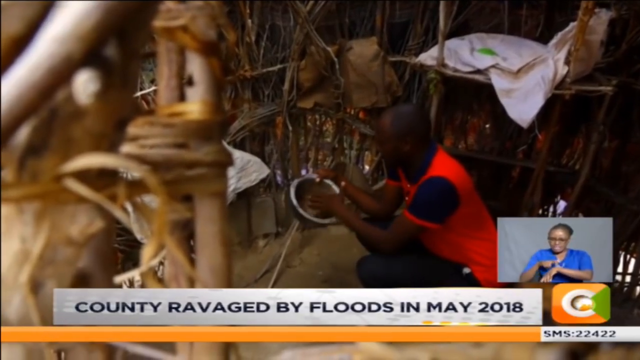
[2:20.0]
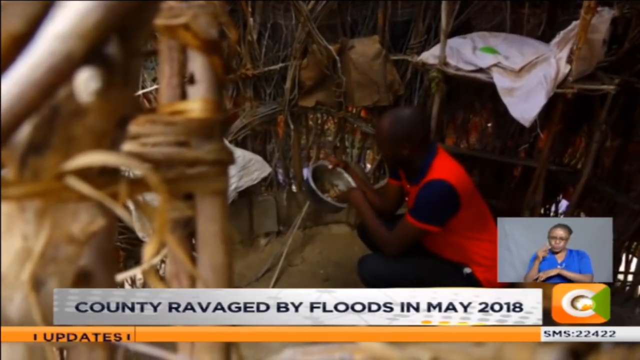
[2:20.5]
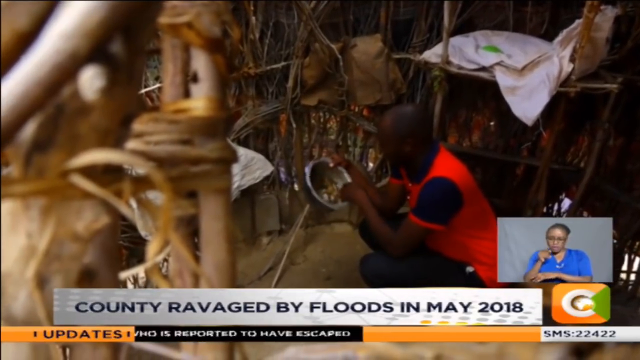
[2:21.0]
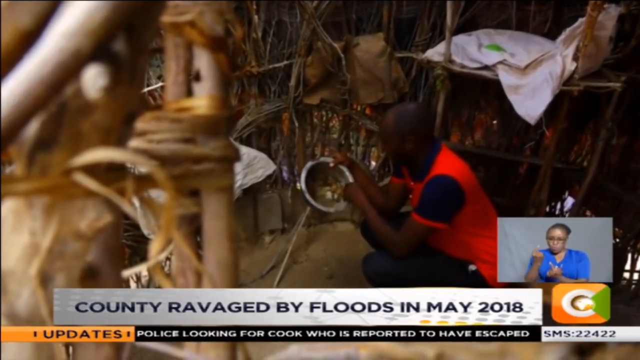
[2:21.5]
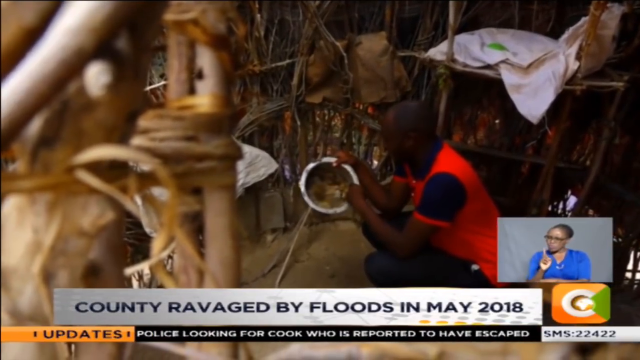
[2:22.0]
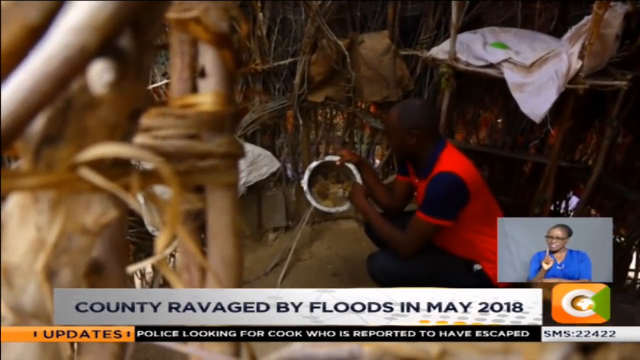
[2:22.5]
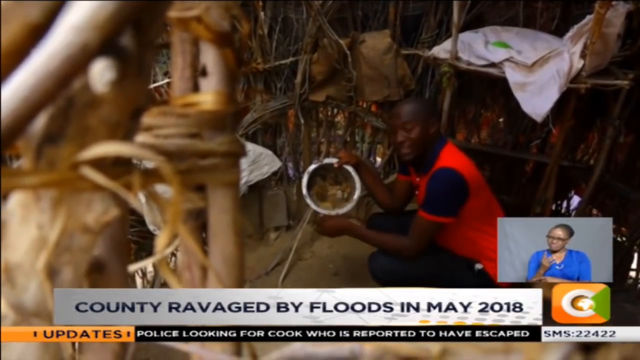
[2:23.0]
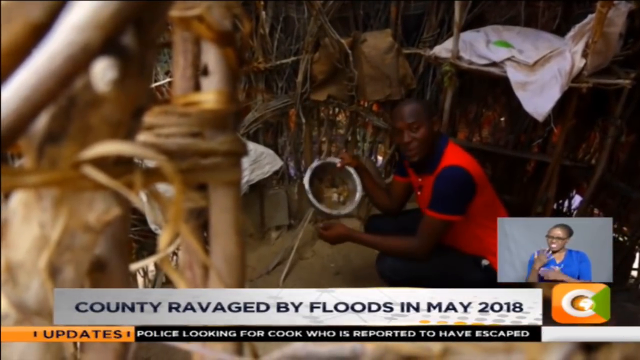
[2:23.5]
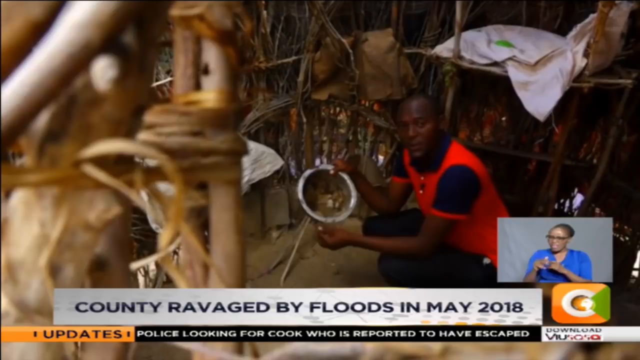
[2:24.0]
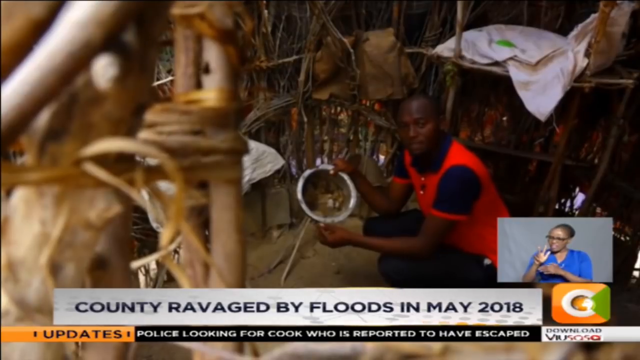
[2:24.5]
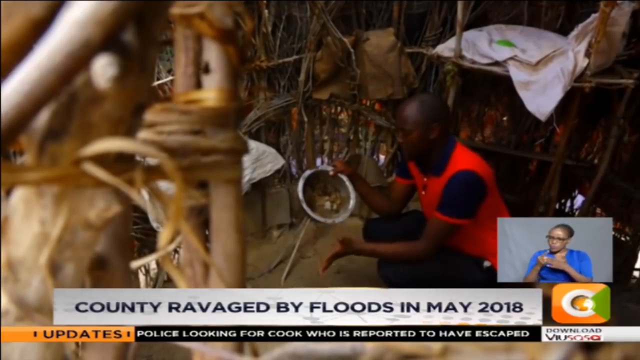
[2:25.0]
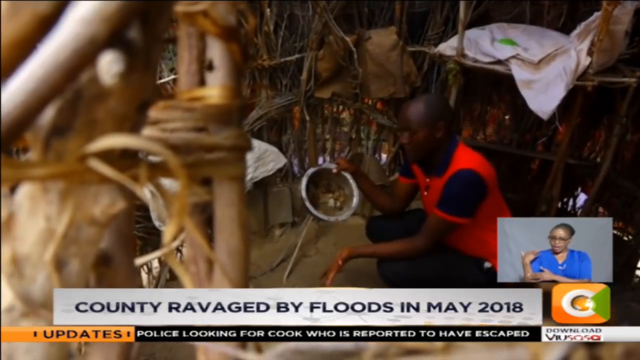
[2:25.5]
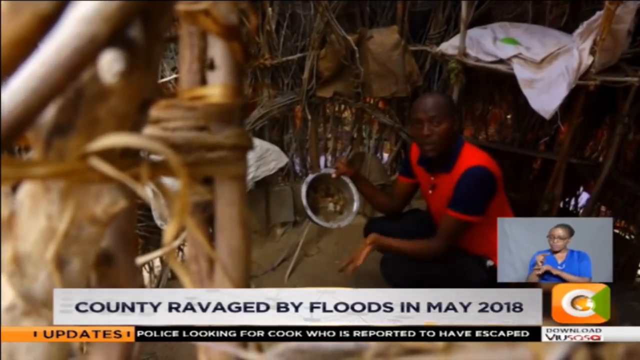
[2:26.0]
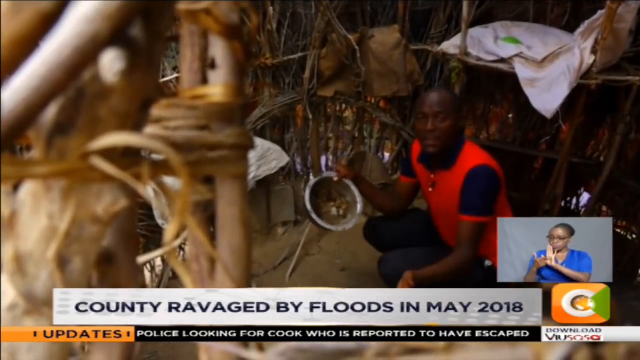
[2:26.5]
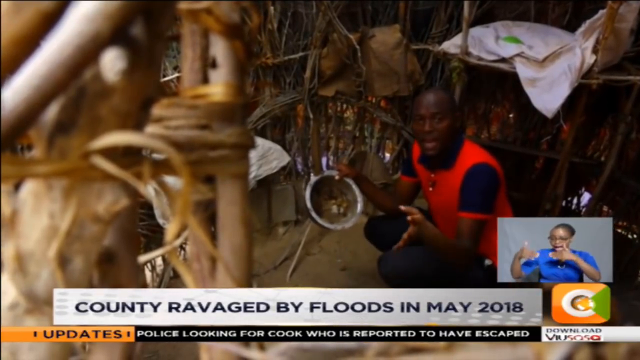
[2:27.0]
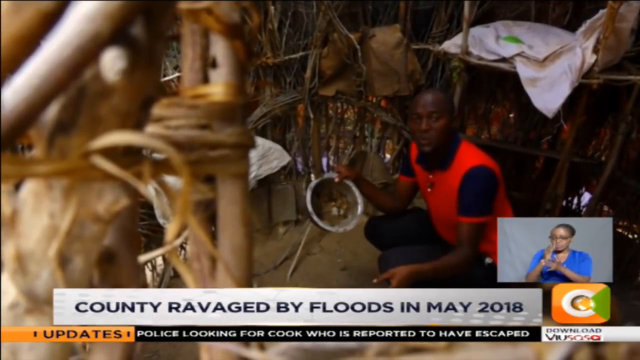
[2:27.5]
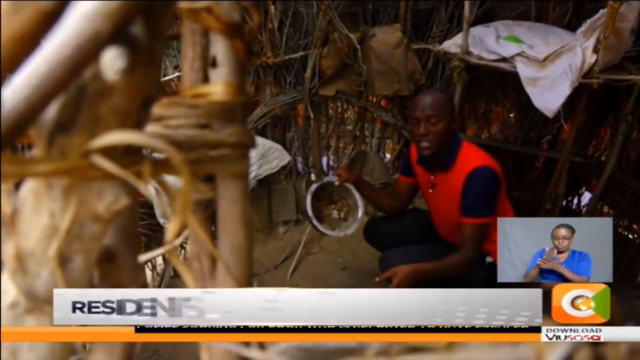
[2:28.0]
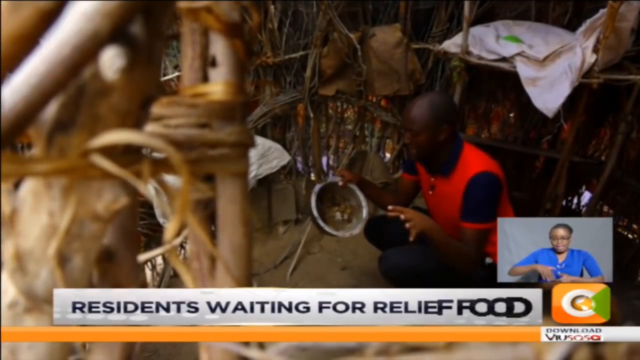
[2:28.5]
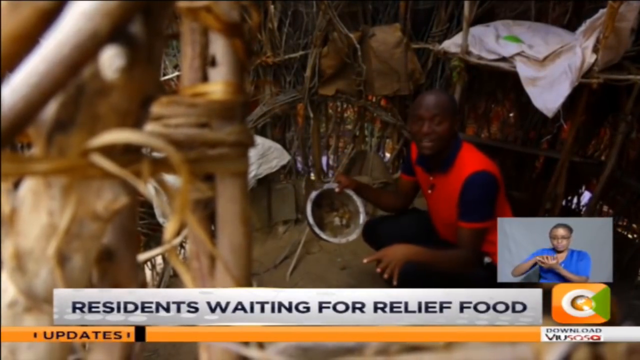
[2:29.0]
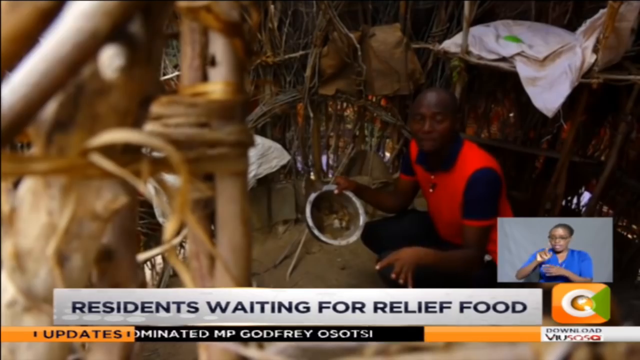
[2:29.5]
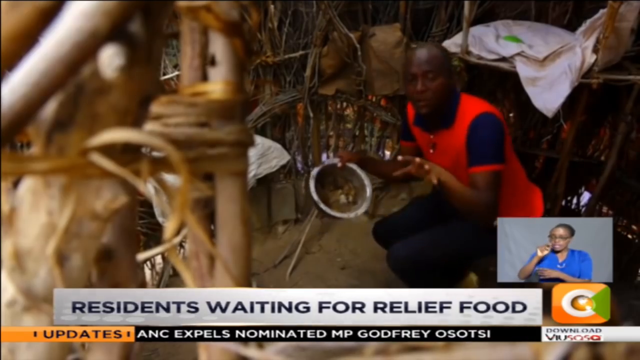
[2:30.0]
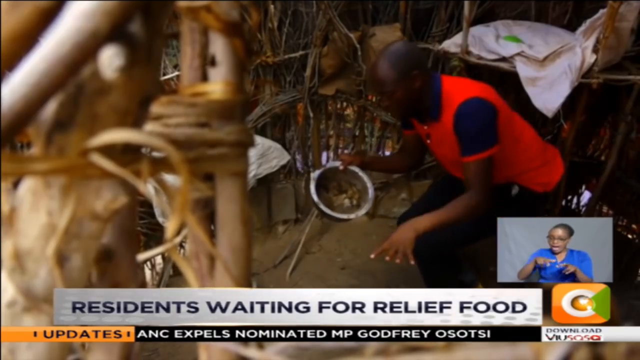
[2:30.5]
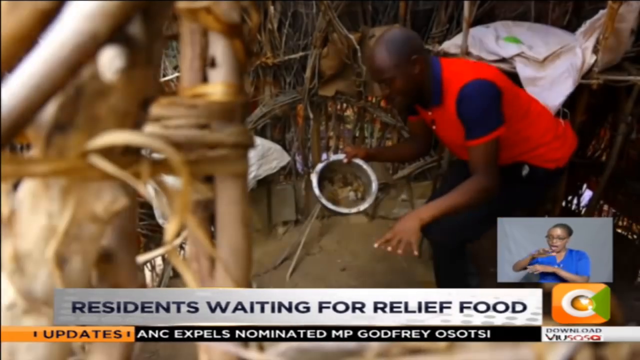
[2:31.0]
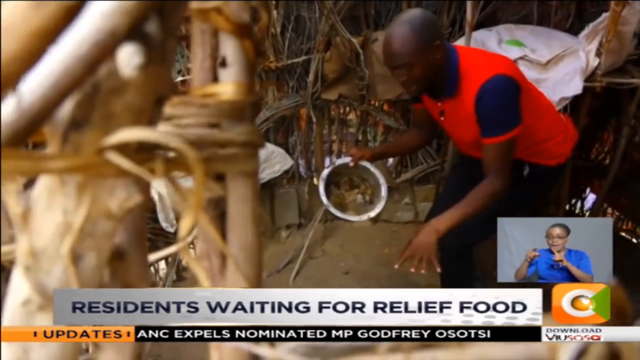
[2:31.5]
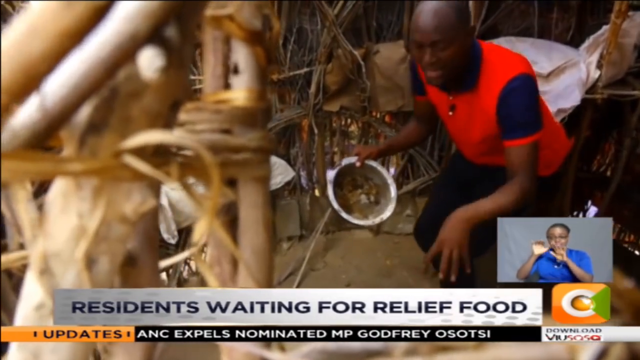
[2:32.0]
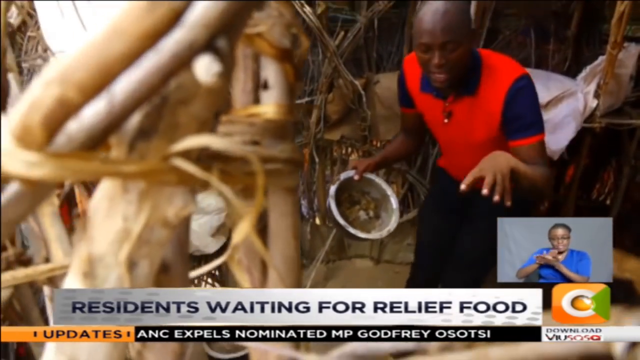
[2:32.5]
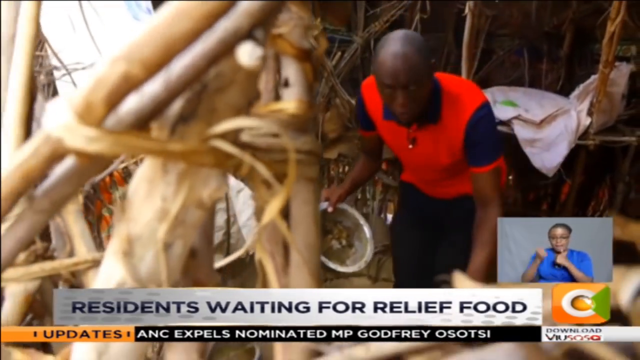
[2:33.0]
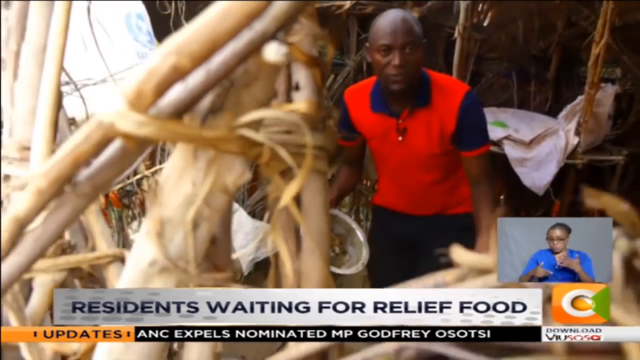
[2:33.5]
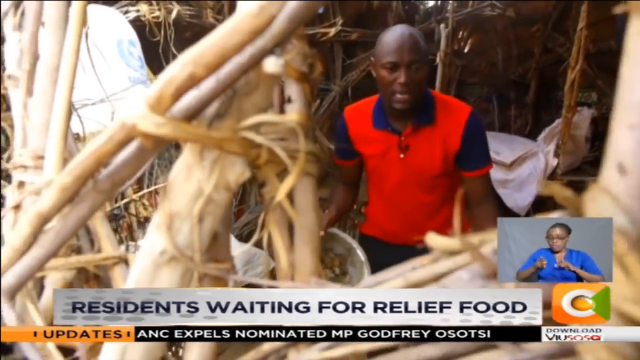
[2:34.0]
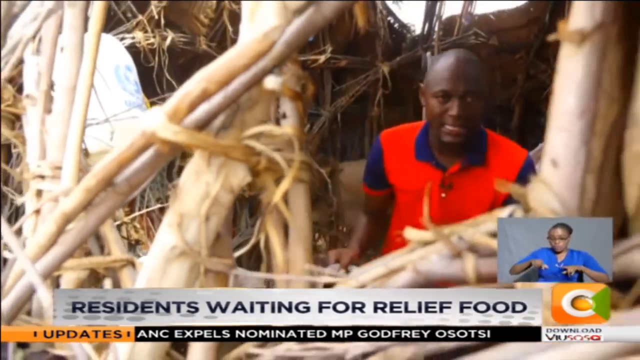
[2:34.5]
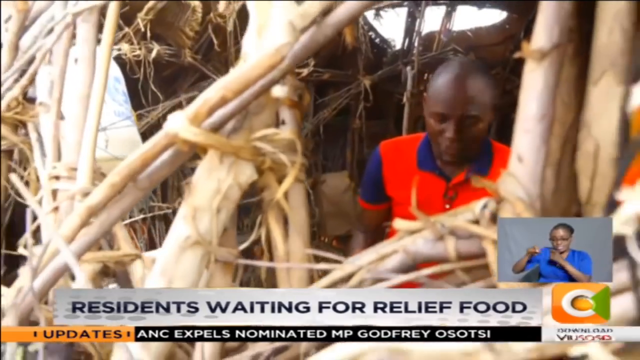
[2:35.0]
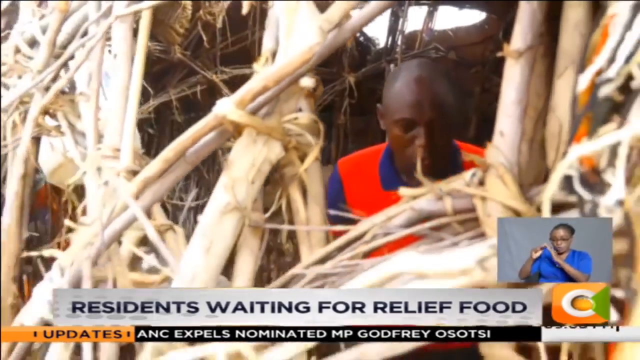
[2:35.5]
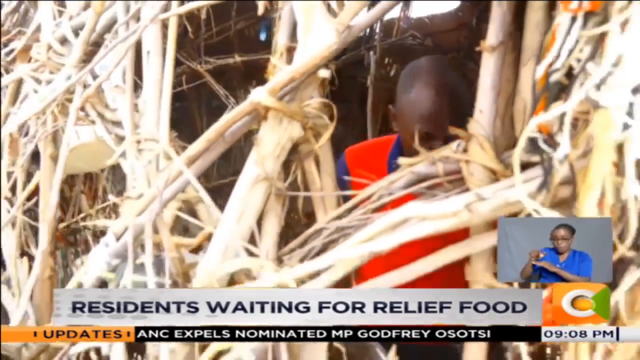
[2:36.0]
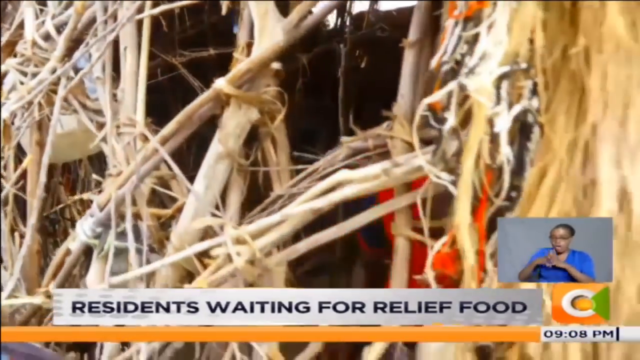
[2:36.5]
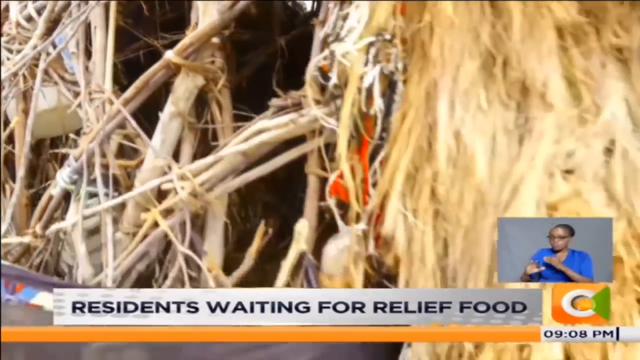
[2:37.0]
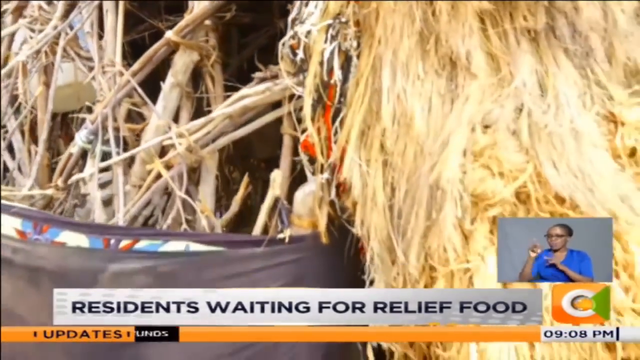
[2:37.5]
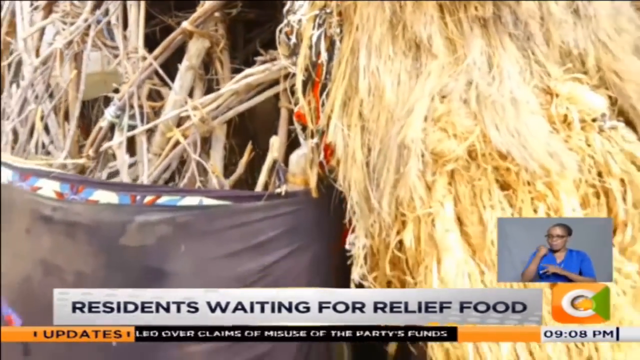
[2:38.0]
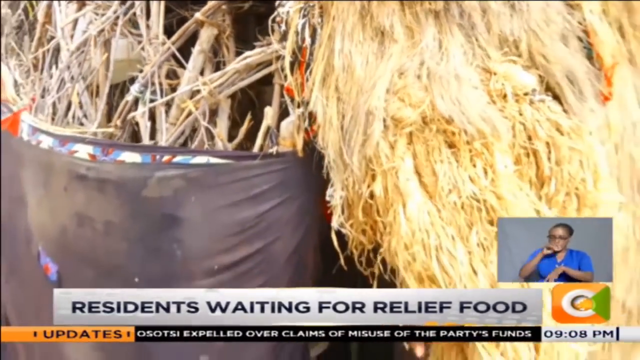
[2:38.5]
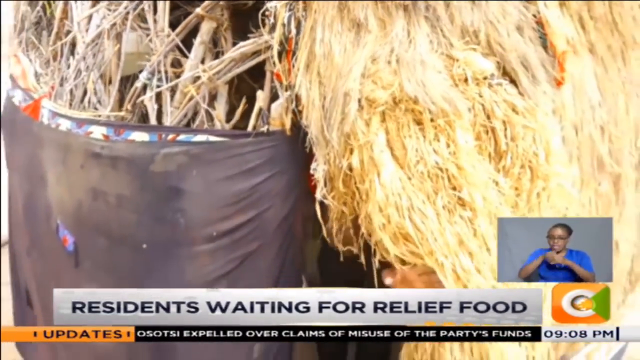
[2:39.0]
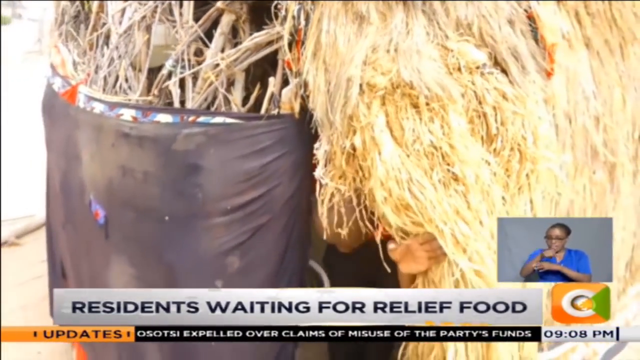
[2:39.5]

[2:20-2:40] The person in the red shirt shows the bowl; it appears possibly that this person is actually the reporter working for the news station. He seems to be explaining the destruction in the area and how difficult it is for people. The camera zooms out of the hut and appears to film from the outside in as he talks. At the very bottom, text reads "residents waiting for relief food" in black lettering as he walks out of the hut. The signer is still signing down below. The hut looks pretty cluttered, with lots of things all over the place, apparently messed up from the drought. Fibers and various other materials holding up the hut are visible on the outside, along with some black type of tarp or something covering one side.